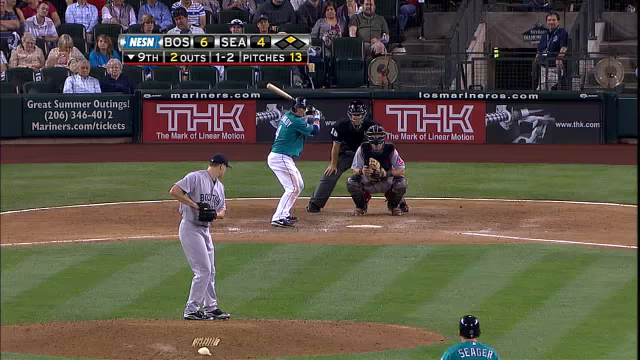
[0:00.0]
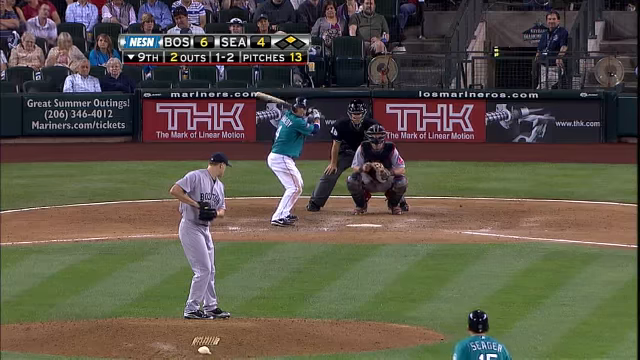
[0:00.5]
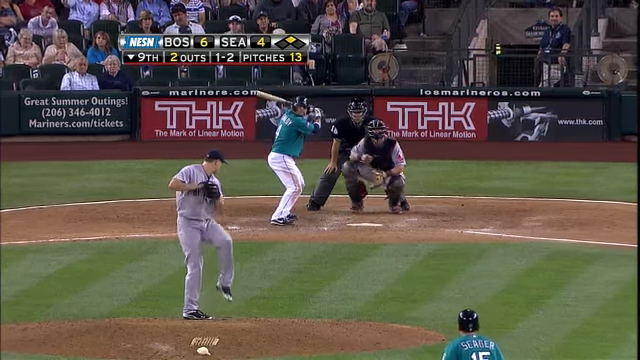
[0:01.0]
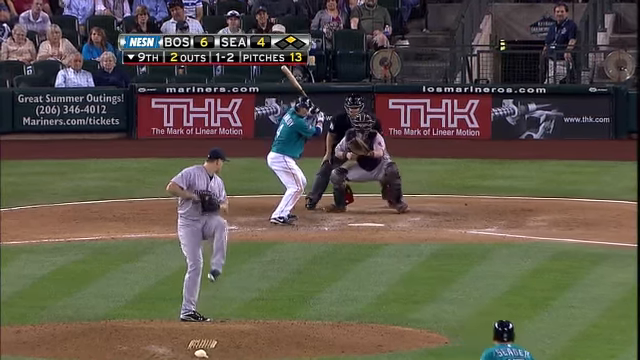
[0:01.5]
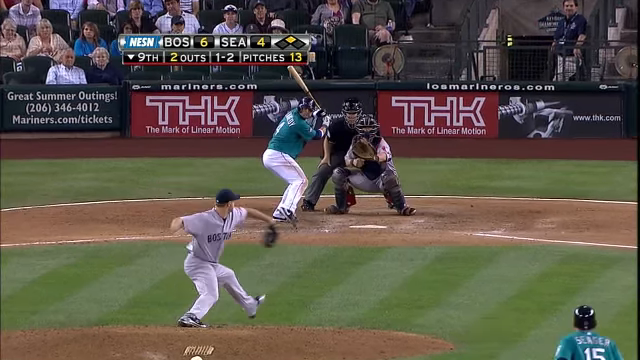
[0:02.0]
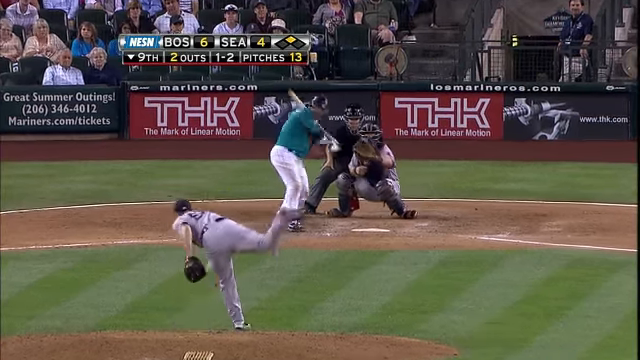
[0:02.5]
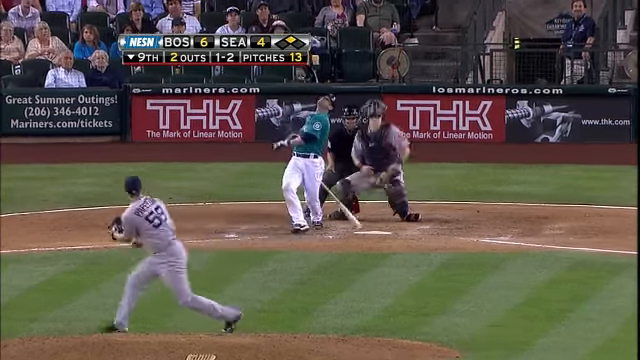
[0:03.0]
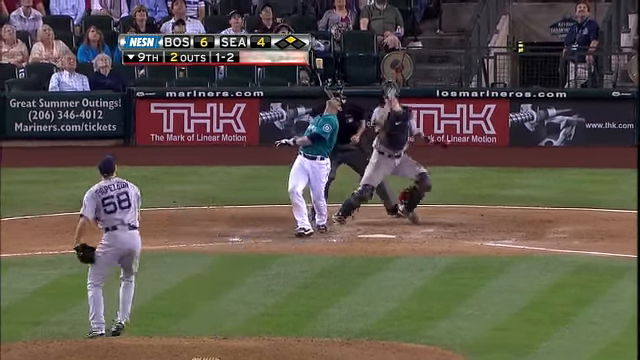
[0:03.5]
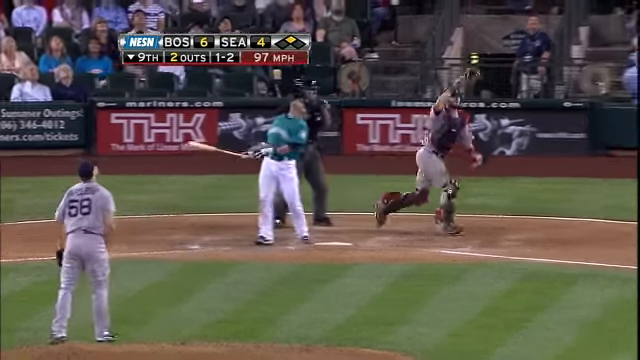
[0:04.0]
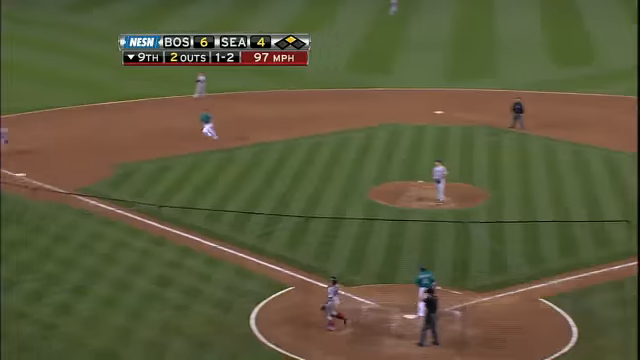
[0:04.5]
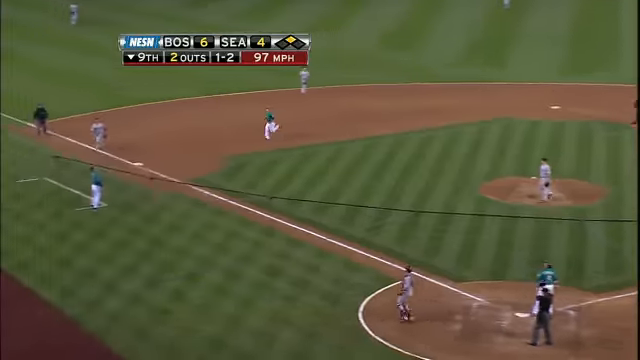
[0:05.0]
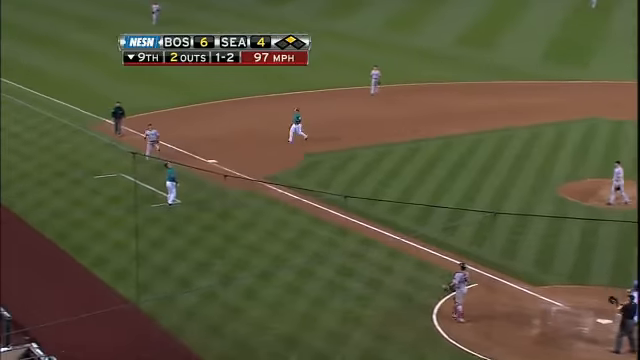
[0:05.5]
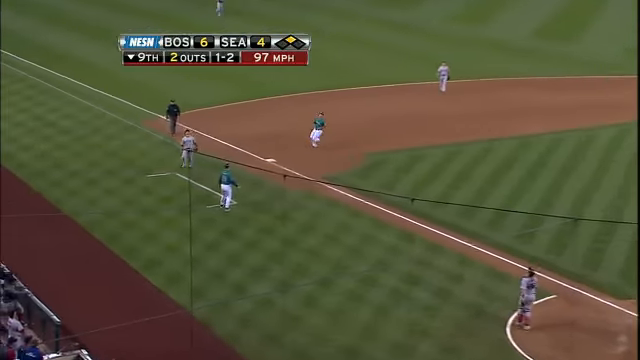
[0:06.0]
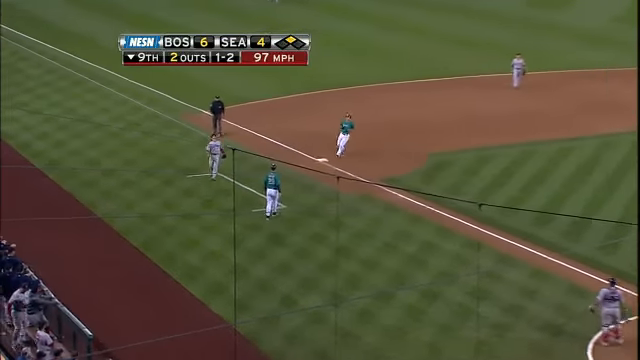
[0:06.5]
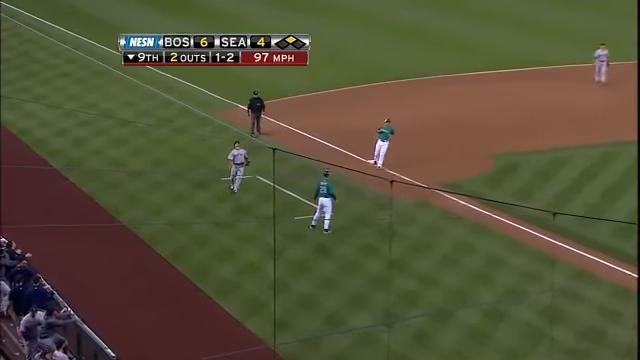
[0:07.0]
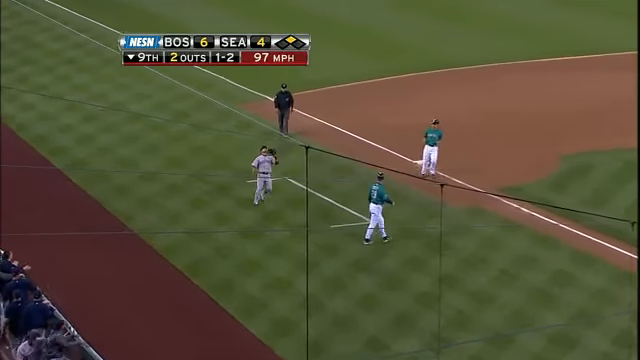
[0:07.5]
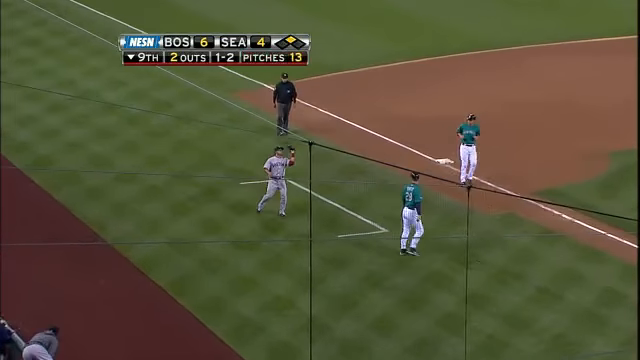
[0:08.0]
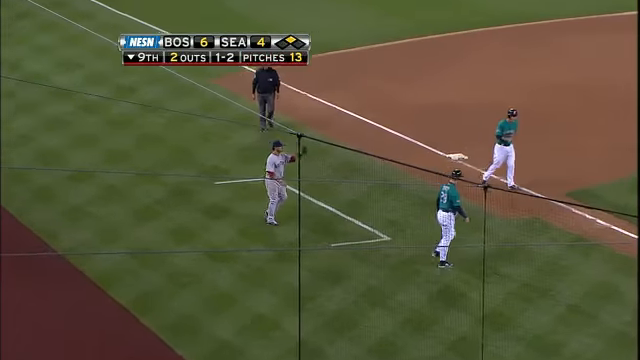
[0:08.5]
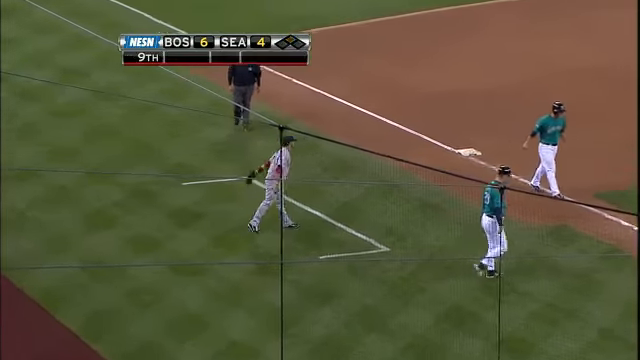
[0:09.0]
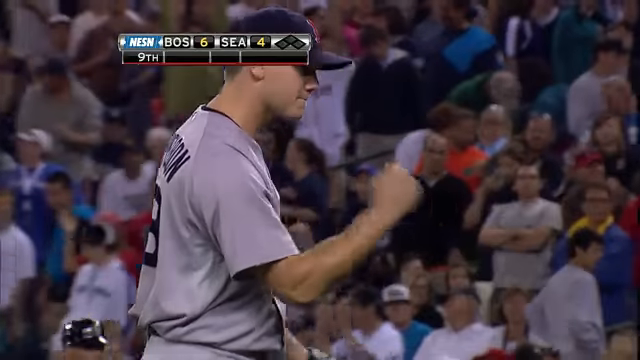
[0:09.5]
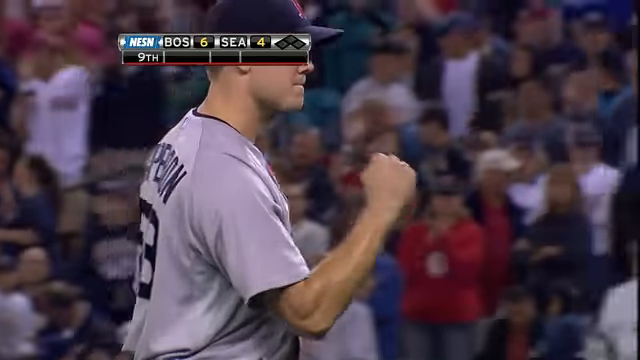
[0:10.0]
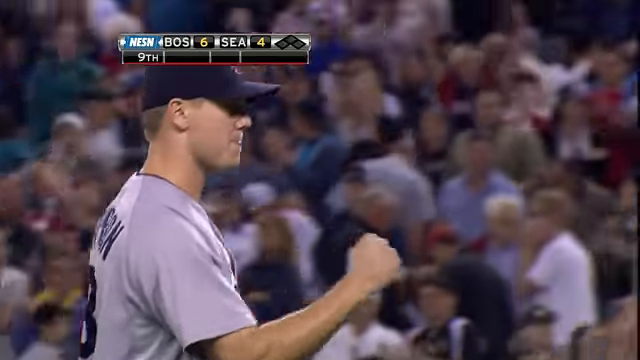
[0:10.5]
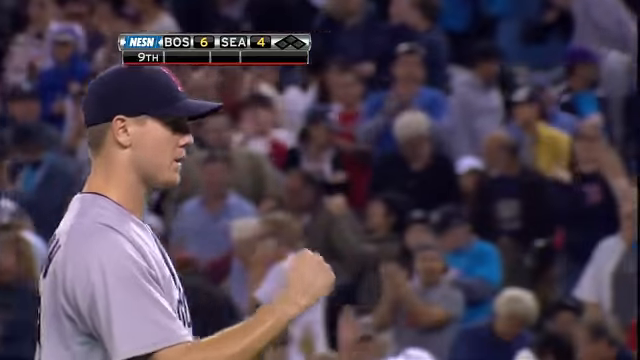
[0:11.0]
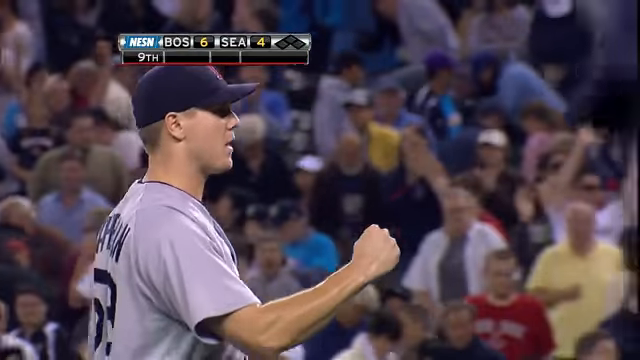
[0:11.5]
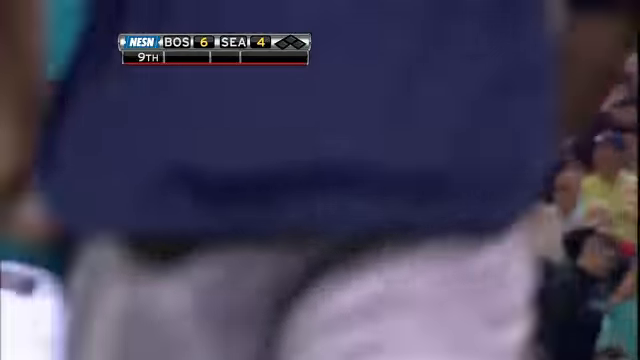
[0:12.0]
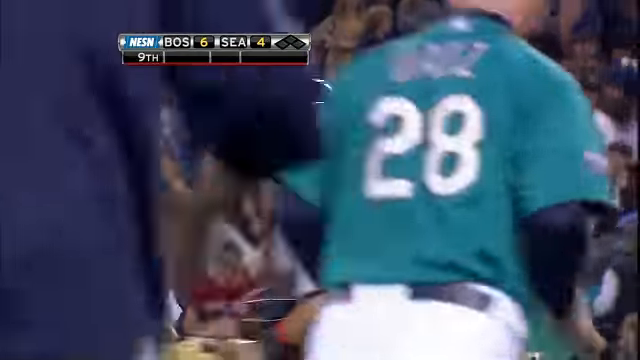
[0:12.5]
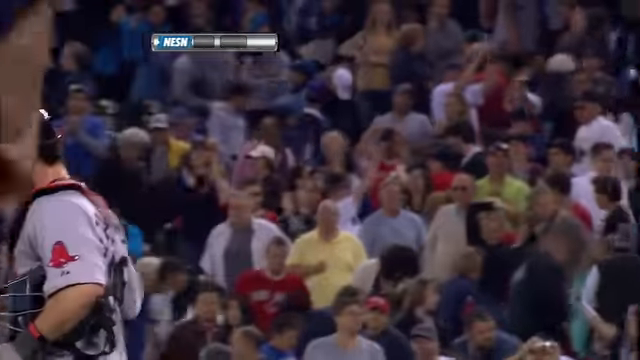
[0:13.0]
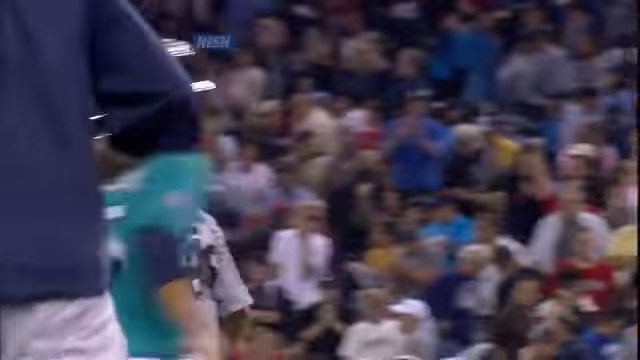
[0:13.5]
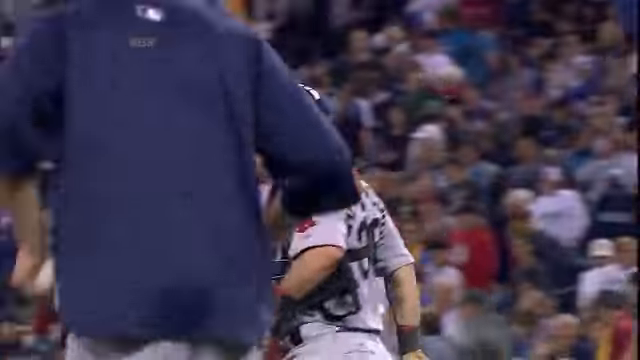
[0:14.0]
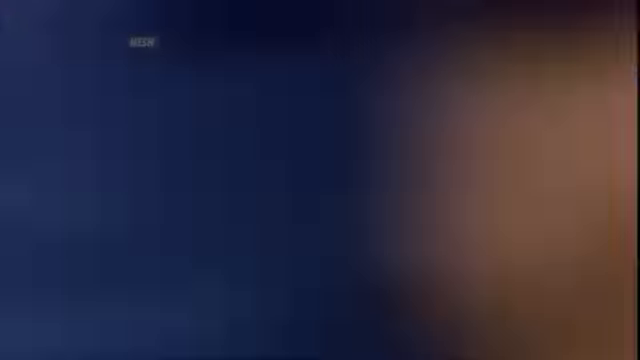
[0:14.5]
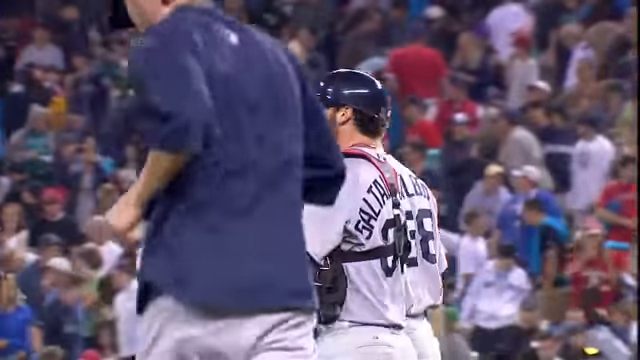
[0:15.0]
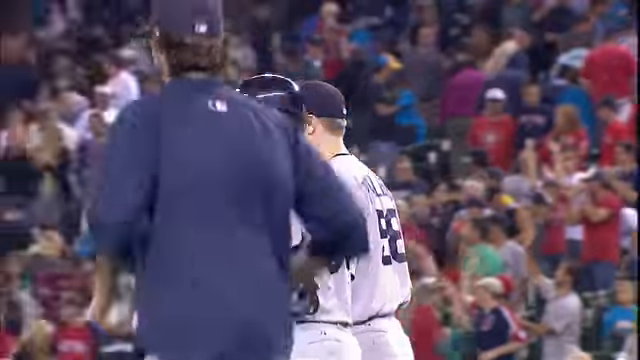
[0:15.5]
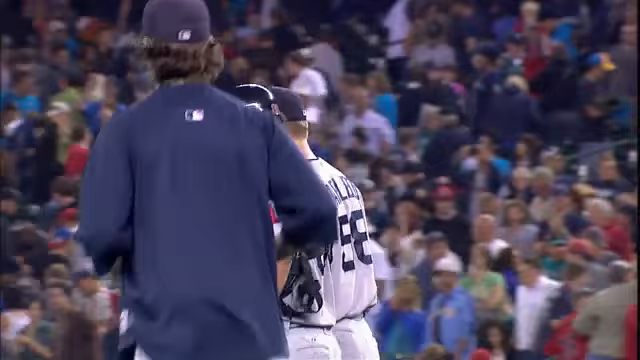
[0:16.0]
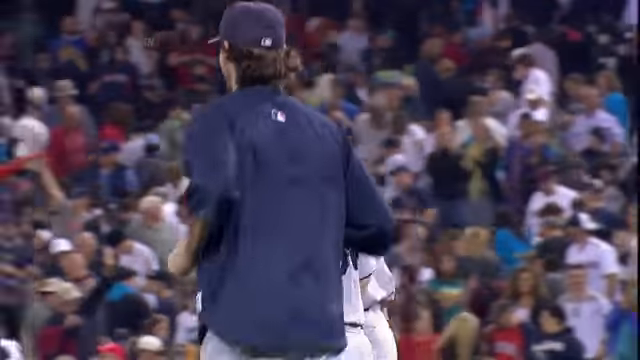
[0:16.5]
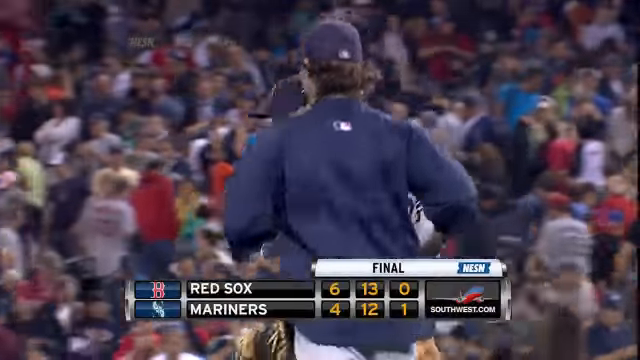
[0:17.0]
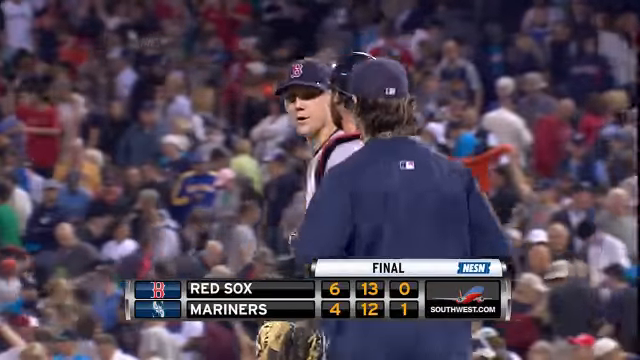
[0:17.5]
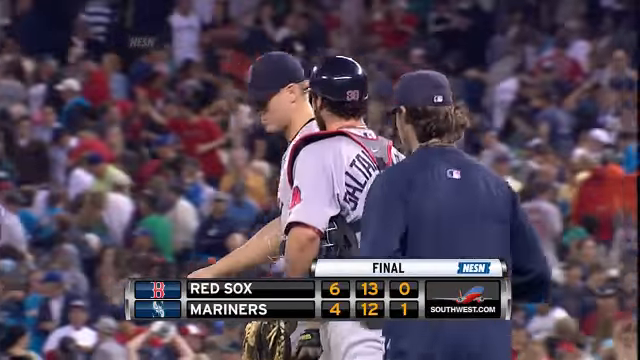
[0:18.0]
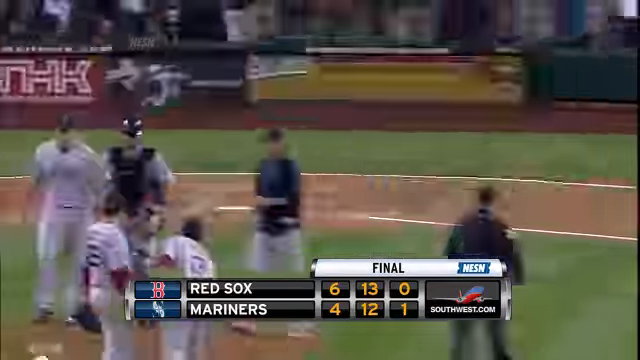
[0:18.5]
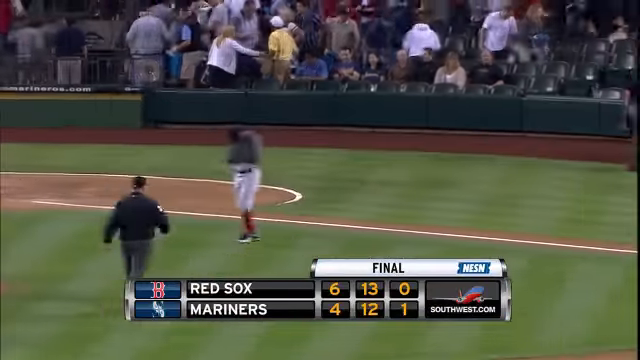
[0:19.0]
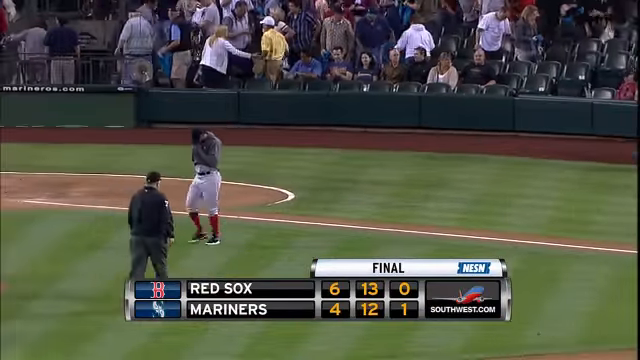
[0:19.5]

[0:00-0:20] A baseball game between the Boston Red Sox and the Seattle Mariners is underway. The score in the upper left area shows 6-4 with the Red Sox leading, and it is the bottom of the 9th inning. There are two outs and one runner on second base. A left-handed Seattle batter is up against a right-handed Boston pitcher, who throws the pitch with his right hand. The batter swings and the ball goes up in the air as a pop-up. The catcher runs to the right, and then an overhead view of the field shows an outfielder running to the left side past the foul line, looking up, stopping, holding the glove out with the left hand, and catching the ball for an out. The scene changes to the Boston pitcher, who holds his right hand in a fist upward and moves it up and down, then talks with the catcher, his teammate. The game is over, and the final score at the bottom shows 6-4, with the Boston Red Sox winning. The view changes to a baseball player wiping his face with the bottom of his sweater.